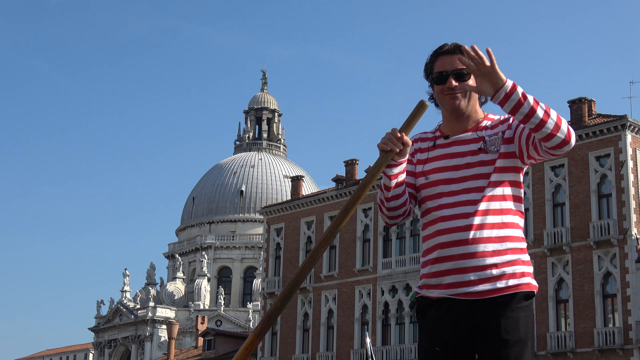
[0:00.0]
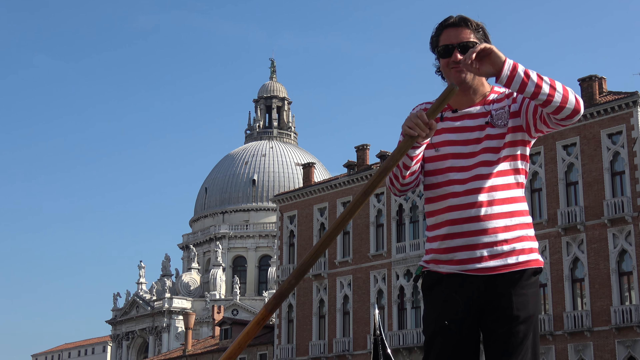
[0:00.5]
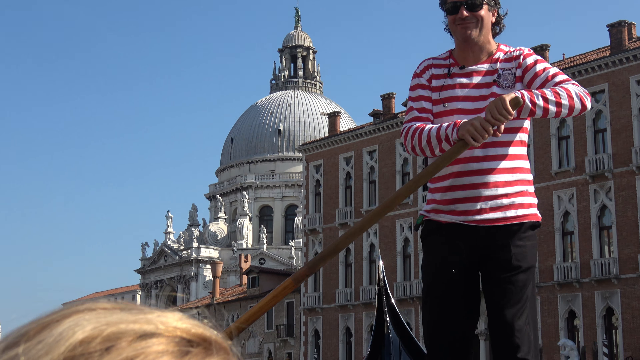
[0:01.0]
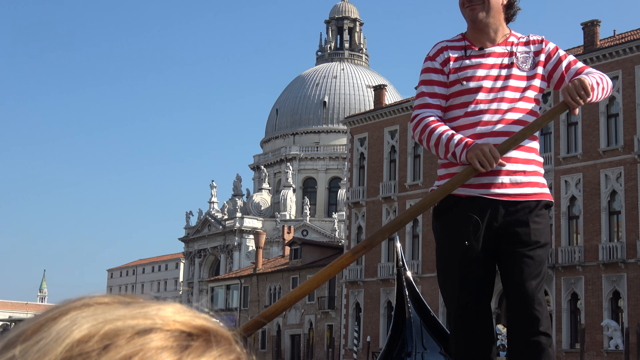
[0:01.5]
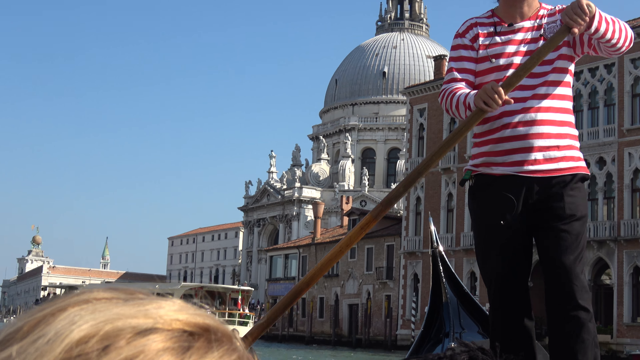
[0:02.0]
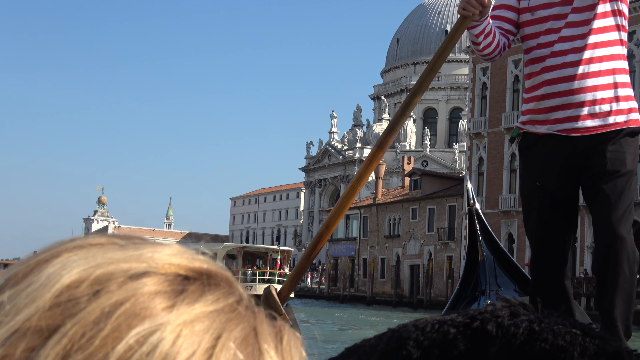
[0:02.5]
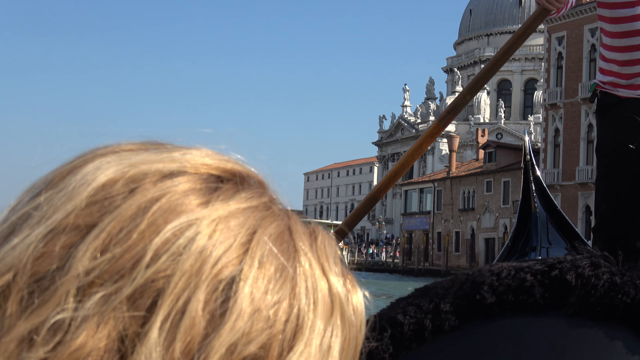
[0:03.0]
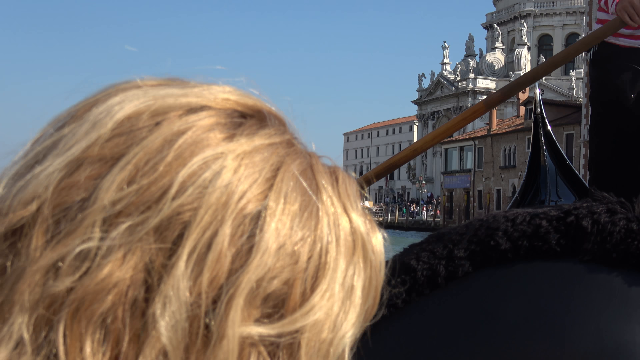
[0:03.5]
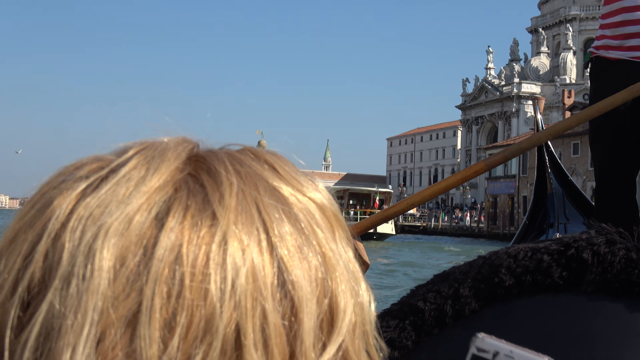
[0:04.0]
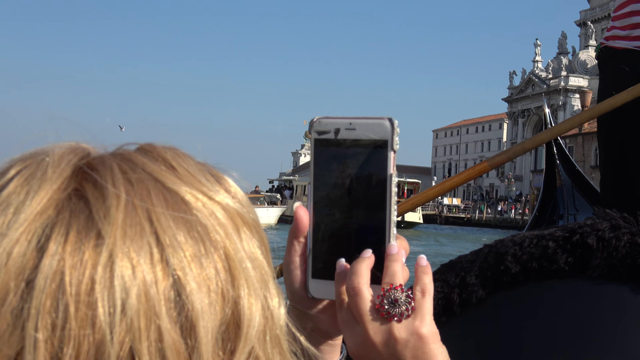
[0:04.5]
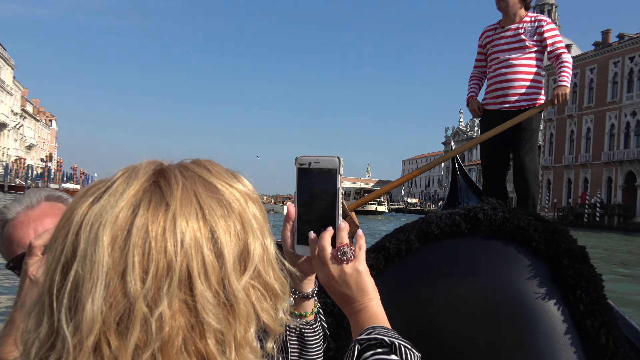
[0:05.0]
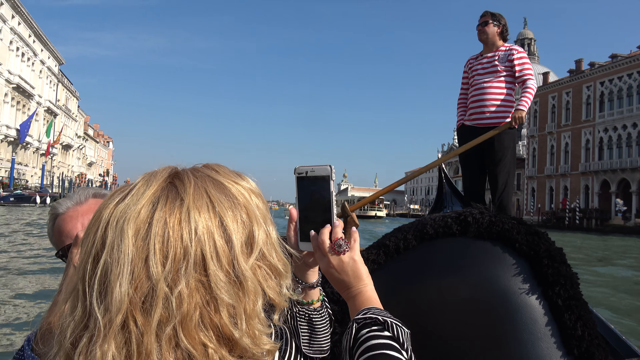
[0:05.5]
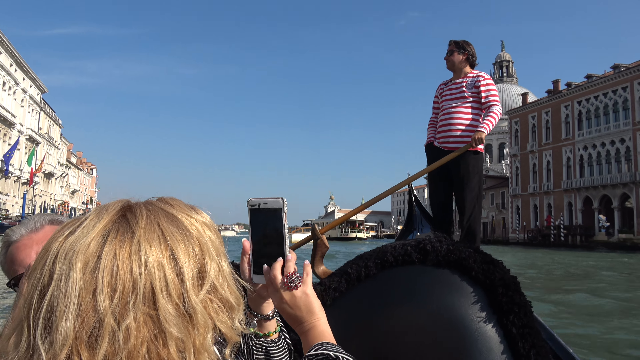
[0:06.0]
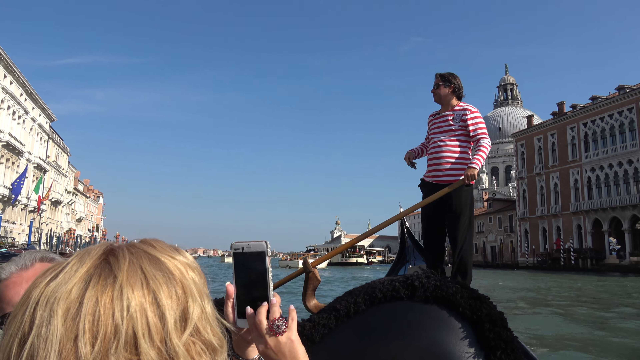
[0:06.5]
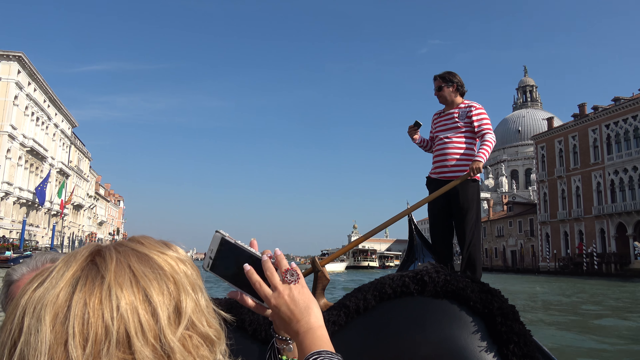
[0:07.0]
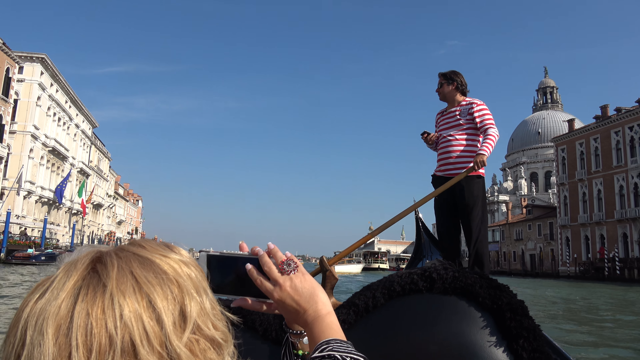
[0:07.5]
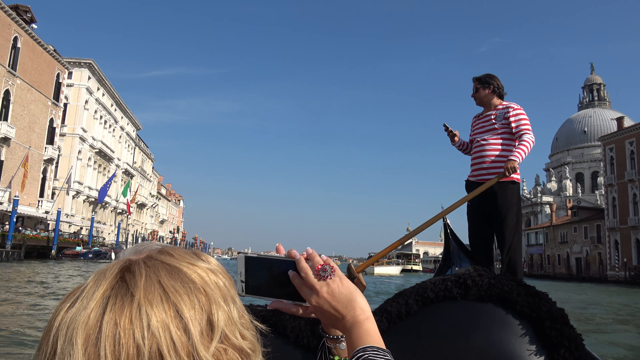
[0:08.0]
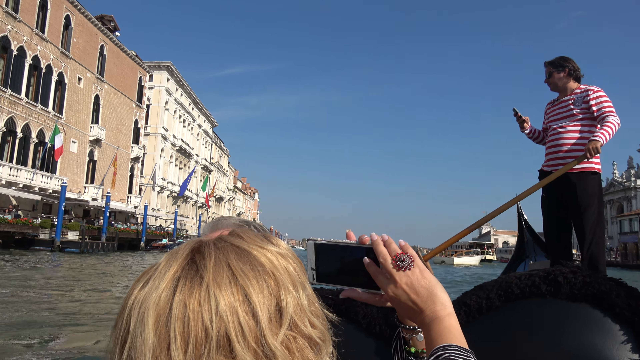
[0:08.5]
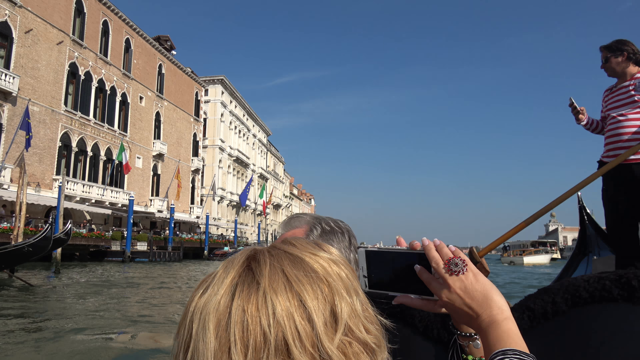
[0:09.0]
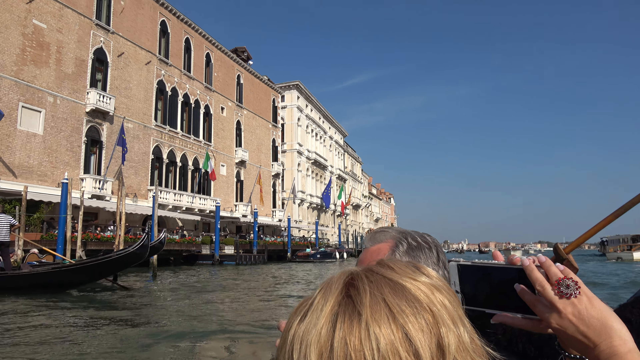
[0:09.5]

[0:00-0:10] A gondola driver wears red sunglasses and has kind of longer brown hair. He has on a big red and white striped shirt with black pants. He is holding kind of the back of the gondola, standing in the rear of the boat. A blonde-haired woman is in the front; she has a white iPhone. A water taxi is visible in the background, along with some old buildings in what looks to be Venice, Italy. White buildings with flags out front line the left side. The gondola is black and very narrow. On the right is what looks to be a city building or possibly a Roman Catholic church; its big round rotunda, statues and spires suggest it might be a church. The camera operator kind of turns around, looking at the buildings on the far side. Several other gondola drivers wear black and white striped shirts. Brown and tan buildings appear, apparently apartment buildings. It is a very sunny day with not a cloud in the sky. Judging by people's outfits, which look more covered up than for a summer visit, it may be more spring or fall than summer.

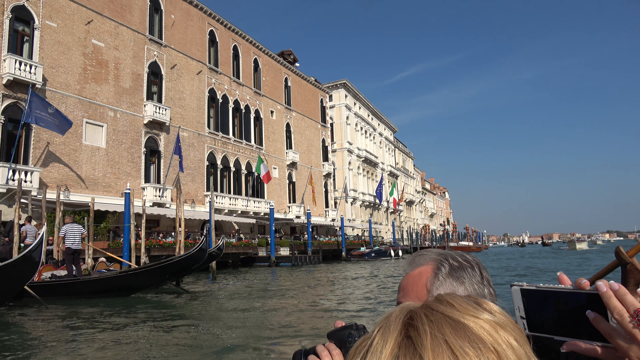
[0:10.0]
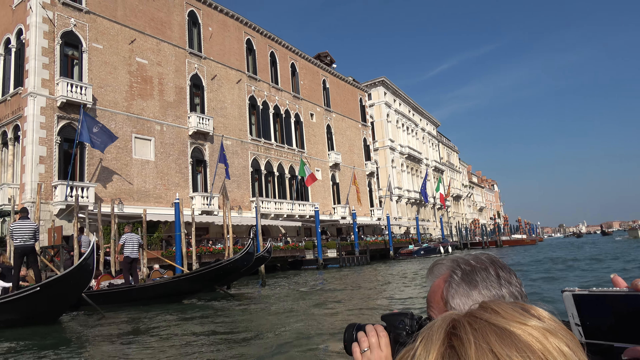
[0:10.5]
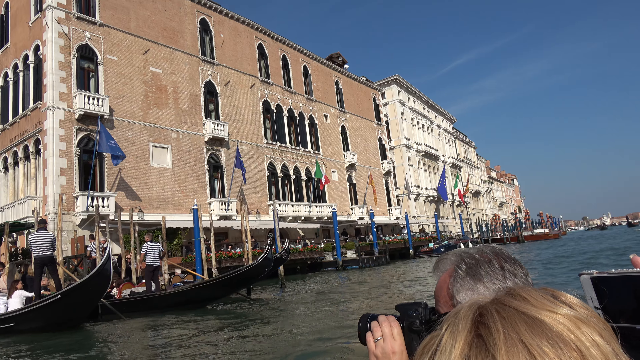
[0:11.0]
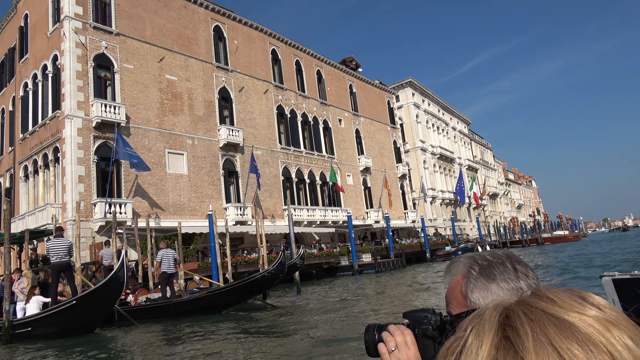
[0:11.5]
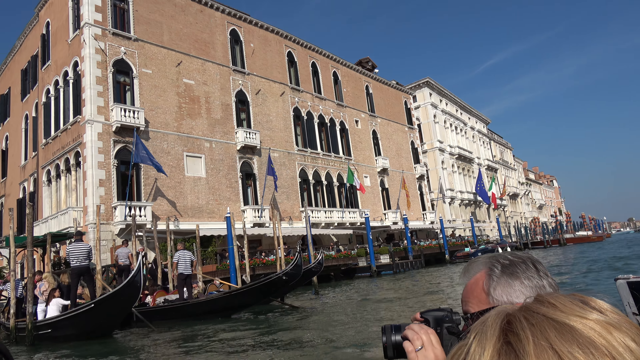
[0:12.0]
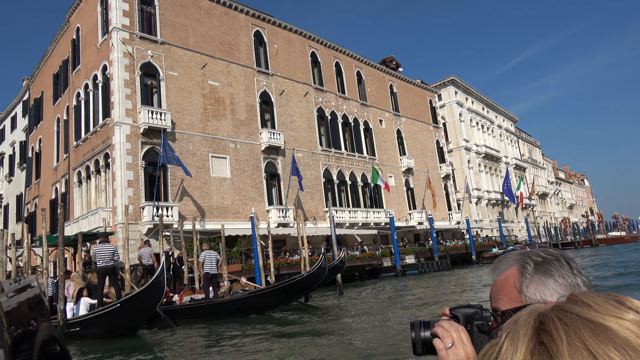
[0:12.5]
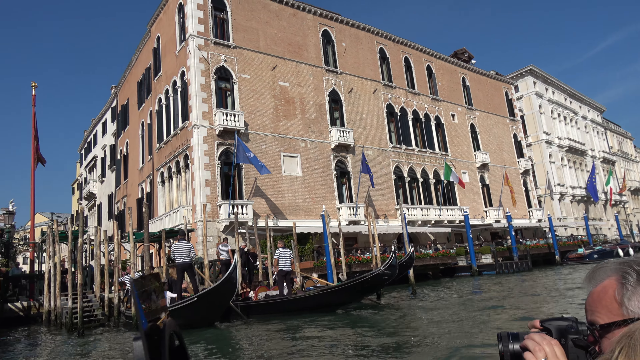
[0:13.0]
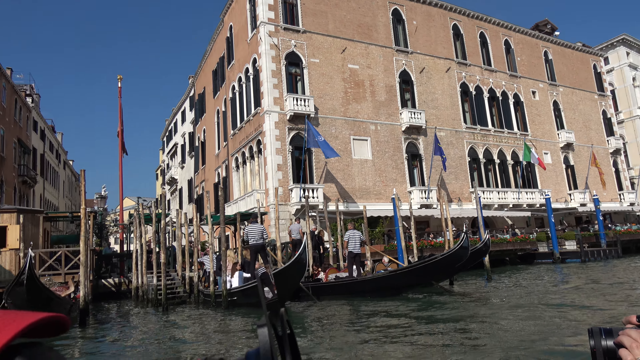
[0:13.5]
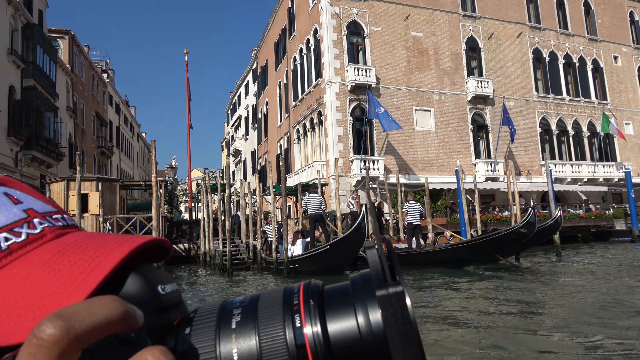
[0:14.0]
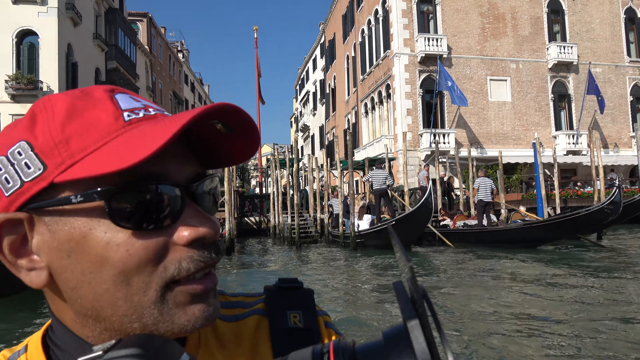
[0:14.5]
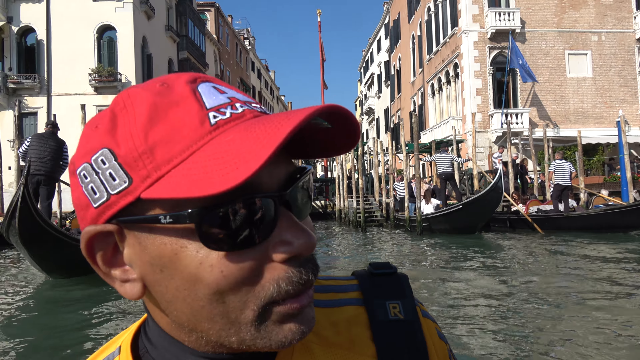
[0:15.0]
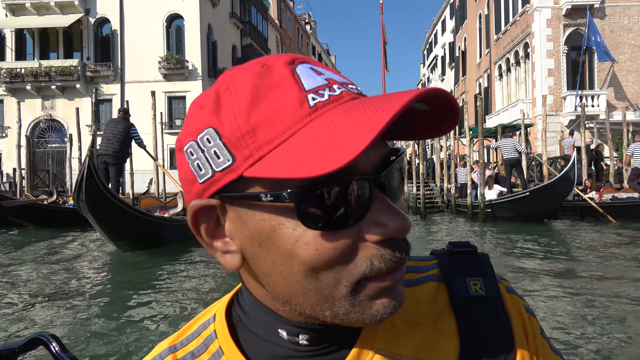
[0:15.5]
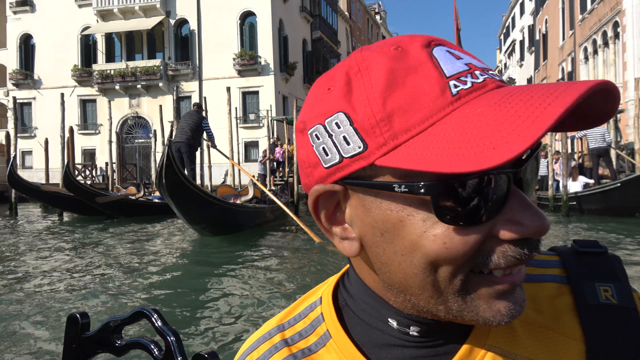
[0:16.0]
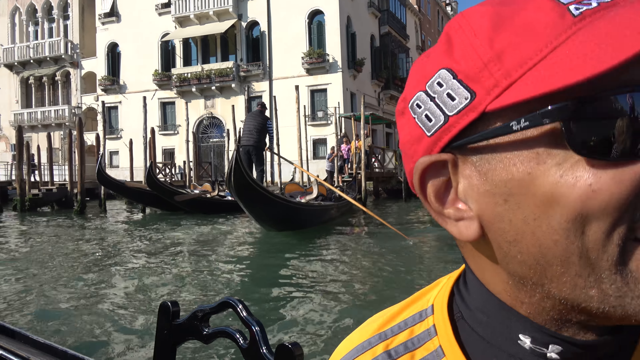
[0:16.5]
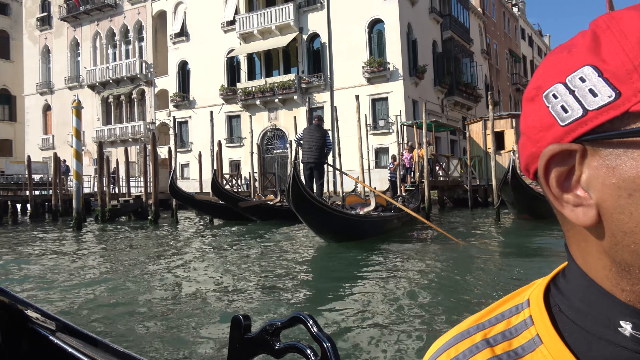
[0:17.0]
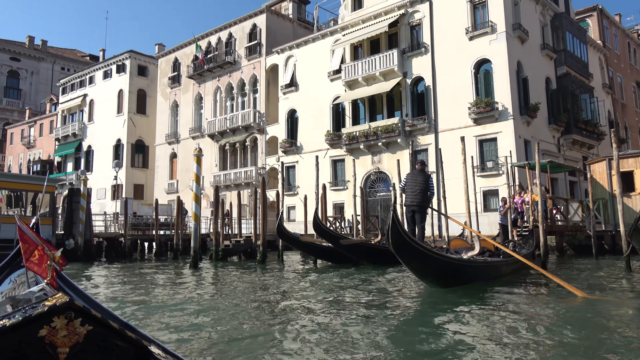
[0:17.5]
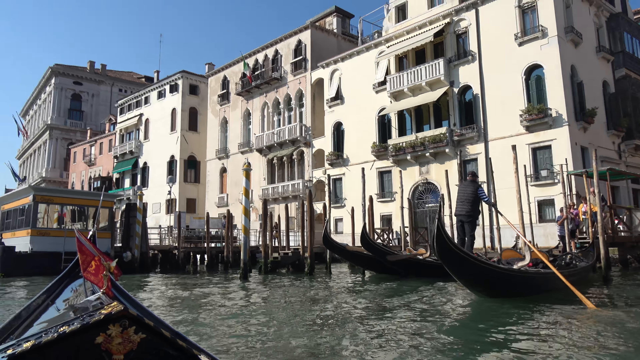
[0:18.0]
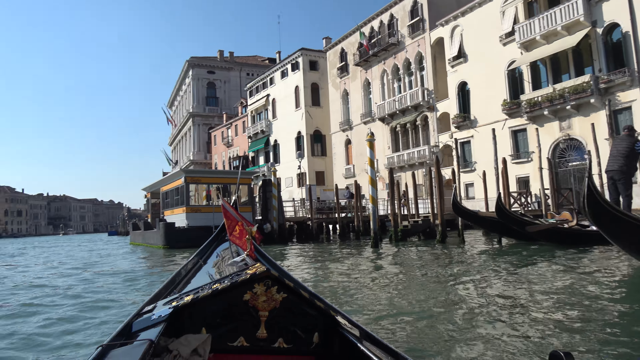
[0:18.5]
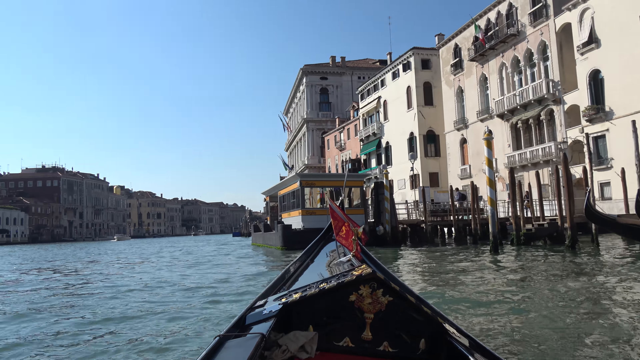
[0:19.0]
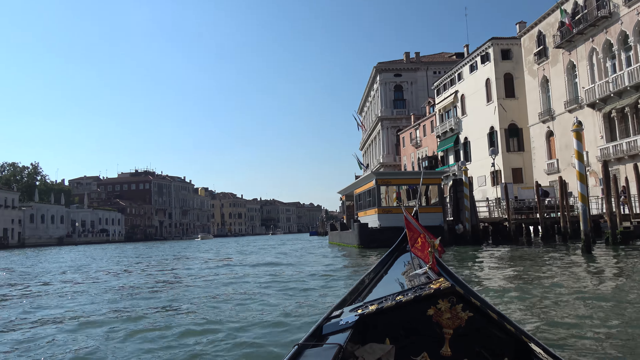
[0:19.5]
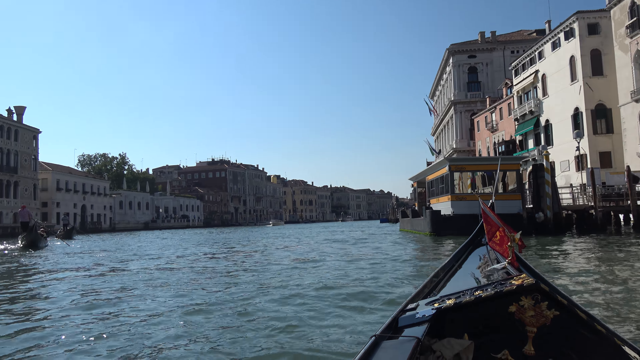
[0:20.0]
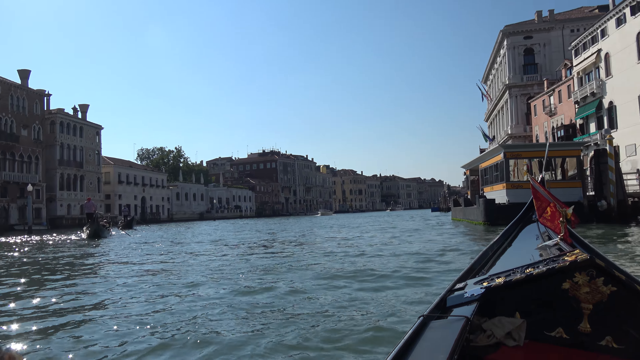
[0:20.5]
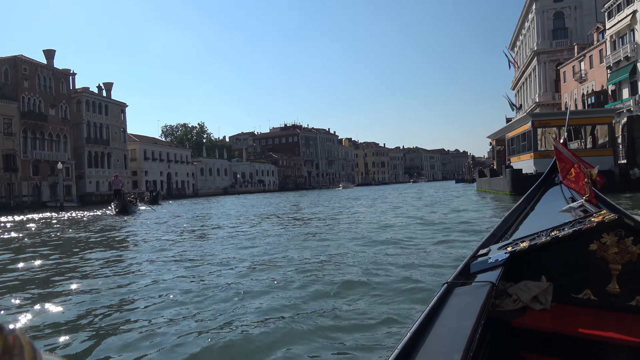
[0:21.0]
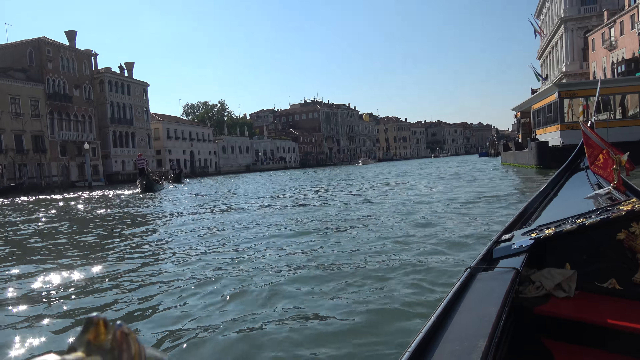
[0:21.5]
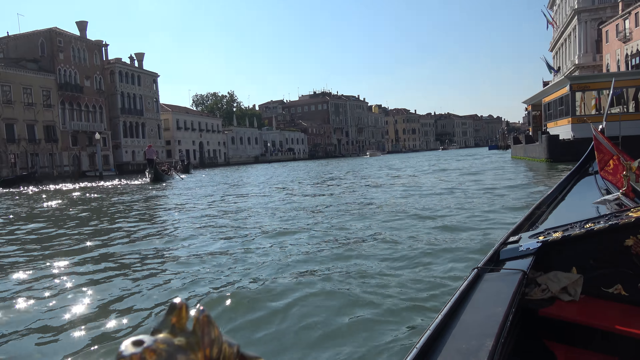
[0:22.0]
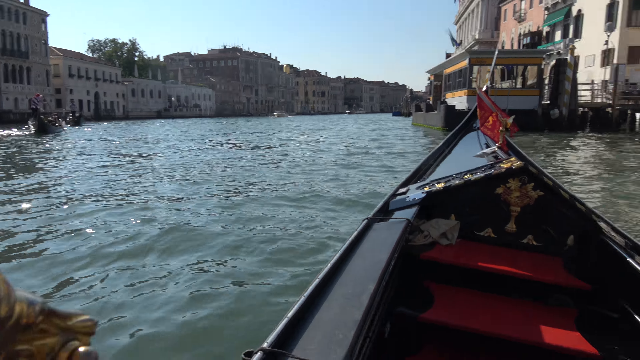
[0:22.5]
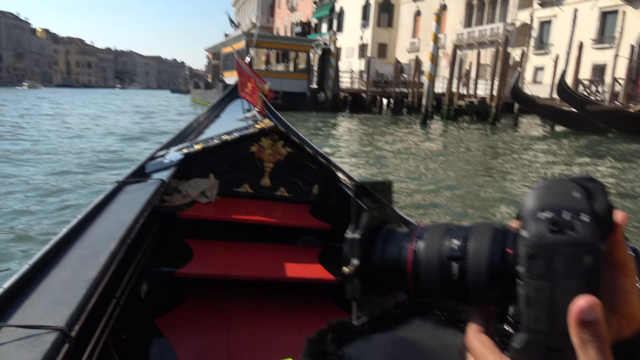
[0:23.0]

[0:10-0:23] Gondola drivers on the left-hand side wear short sleeves in a black and white pattern. Some blue flags and what look like Italian flags are hanging. Several tourists are visible, kind of just their hands; a man with salt and pepper hair has a big camera, and a blonde woman holds a cell phone. The view is kind of toward the waterfront. The gondola driver has passengers. The camera turns around to show a Hispanic man in a red baseball cap with a white A and the number 88, wearing a yellow jersey with blue stripes. Behind him to the left is a gondola driver in black and white with a quilted vest. There are some chairs in this gondola and a flag along the back. The camera turns around again to various apartment buildings and businesses, including kind of an enclosed patio in kind of a brown wood. Many buildings line the waterway. The water appears to be fairly high. A couple of other gondolas are along the back left-hand side of the shore.